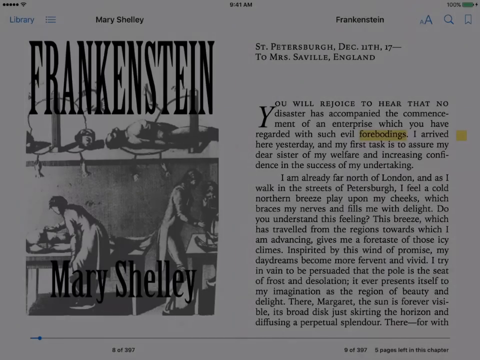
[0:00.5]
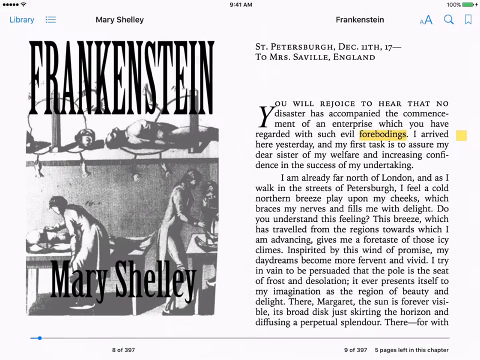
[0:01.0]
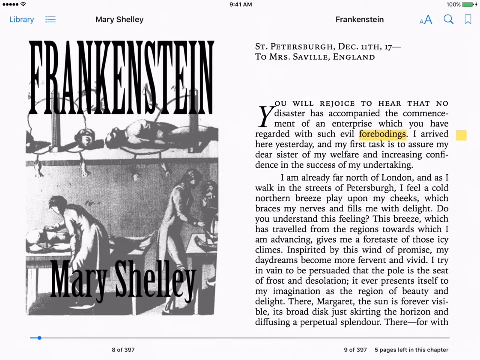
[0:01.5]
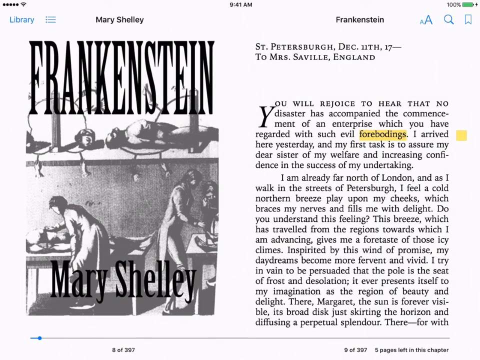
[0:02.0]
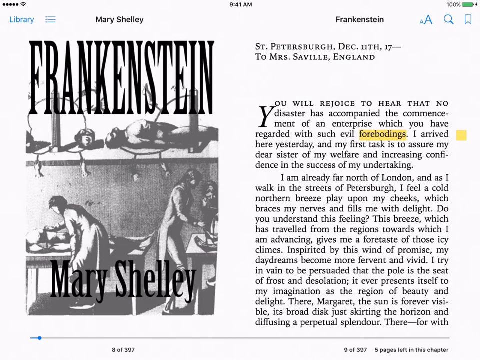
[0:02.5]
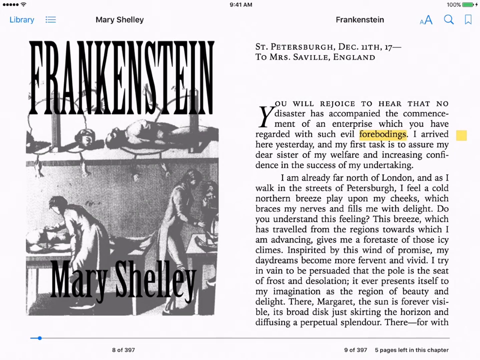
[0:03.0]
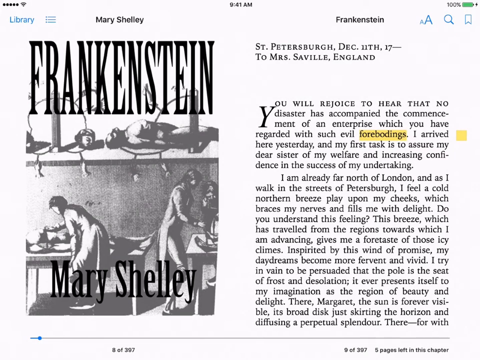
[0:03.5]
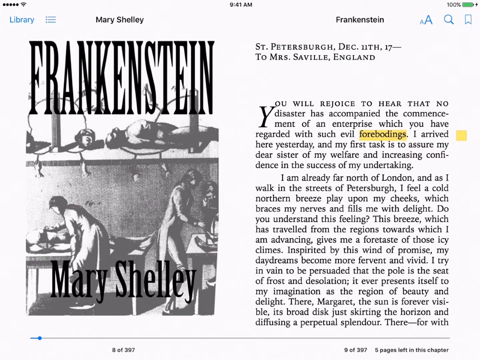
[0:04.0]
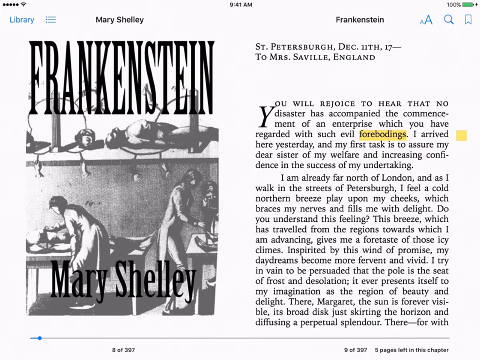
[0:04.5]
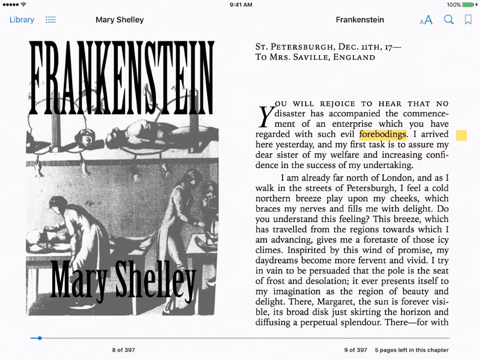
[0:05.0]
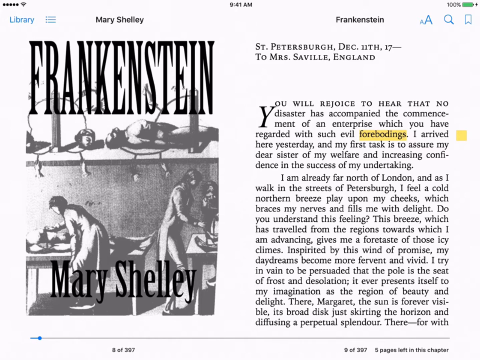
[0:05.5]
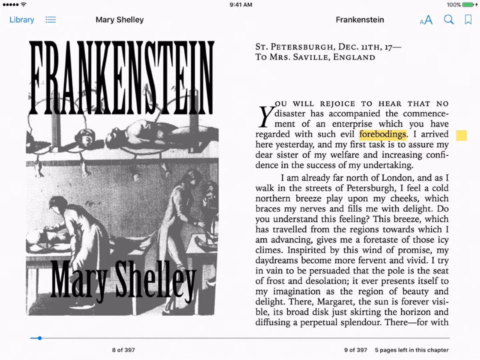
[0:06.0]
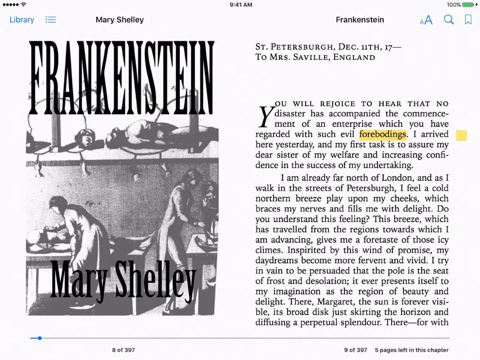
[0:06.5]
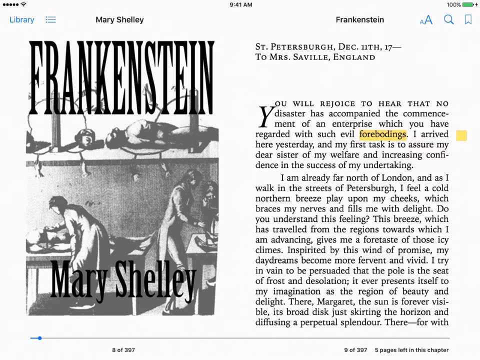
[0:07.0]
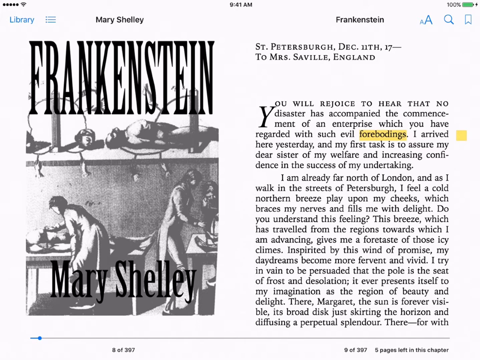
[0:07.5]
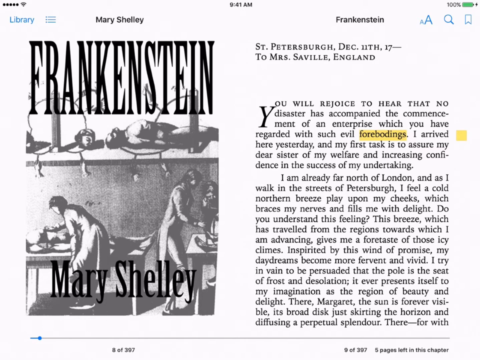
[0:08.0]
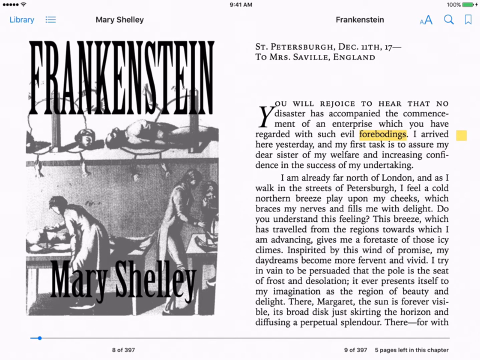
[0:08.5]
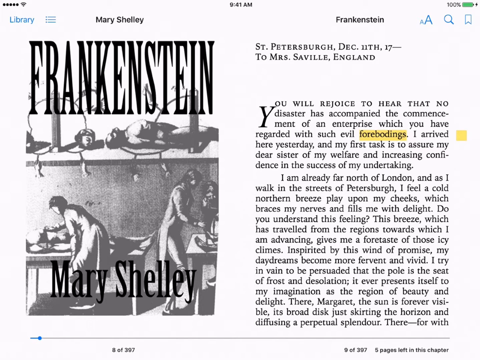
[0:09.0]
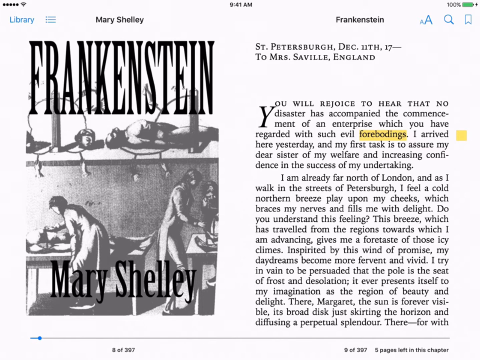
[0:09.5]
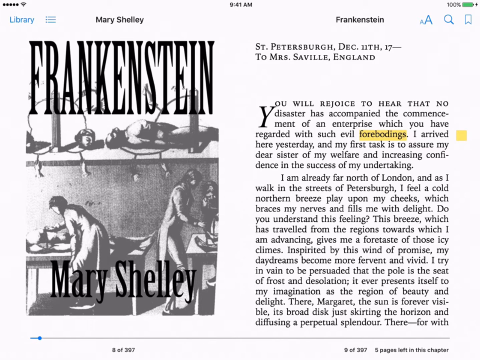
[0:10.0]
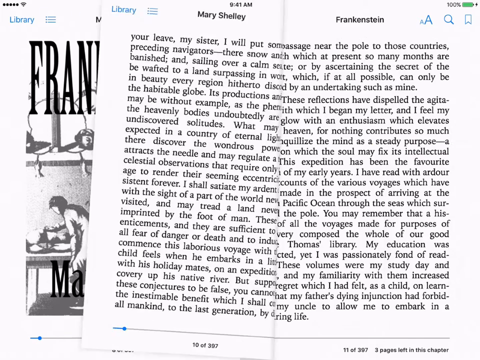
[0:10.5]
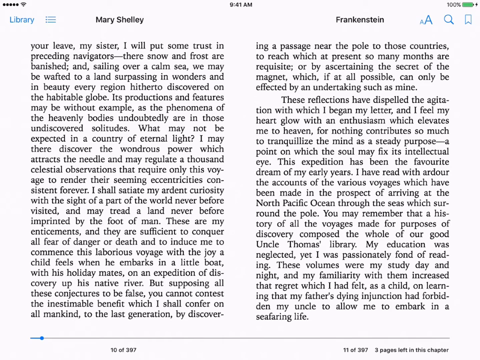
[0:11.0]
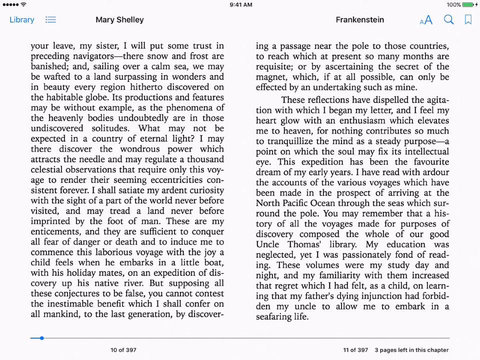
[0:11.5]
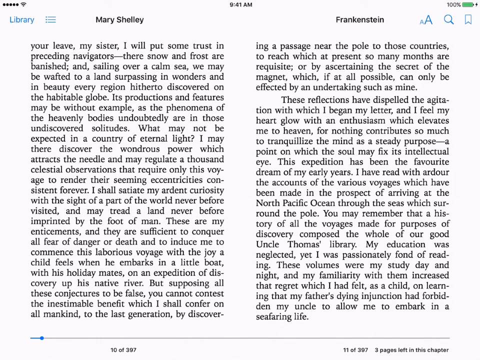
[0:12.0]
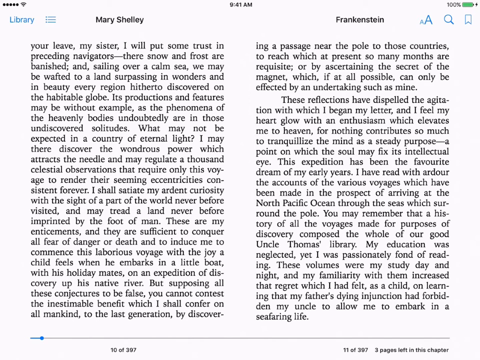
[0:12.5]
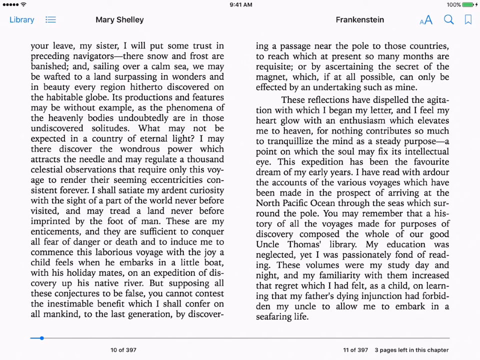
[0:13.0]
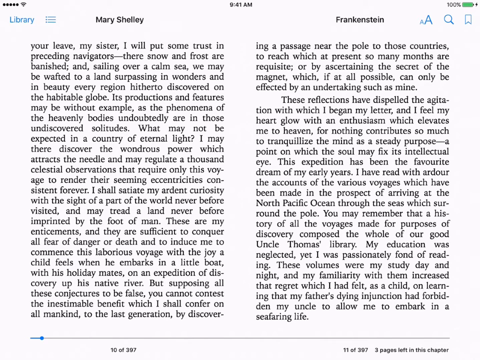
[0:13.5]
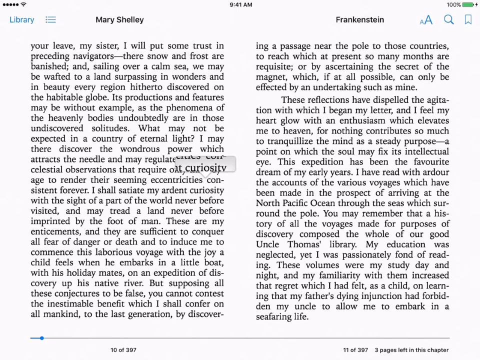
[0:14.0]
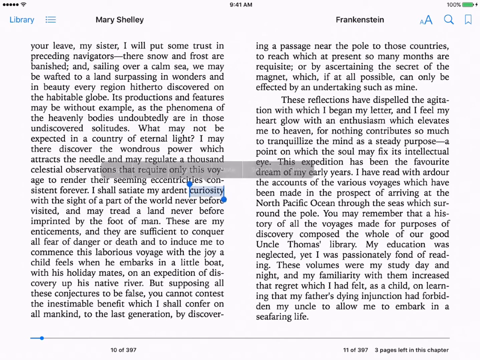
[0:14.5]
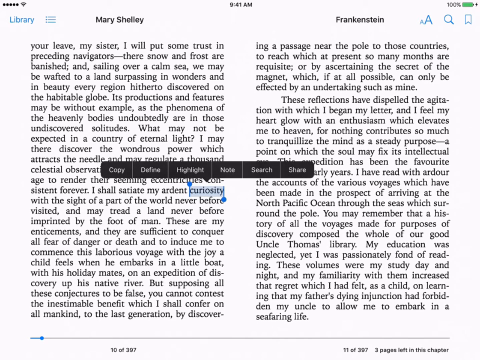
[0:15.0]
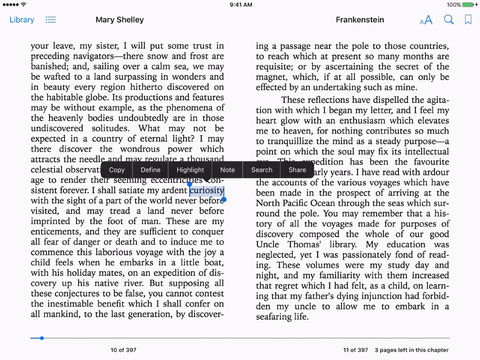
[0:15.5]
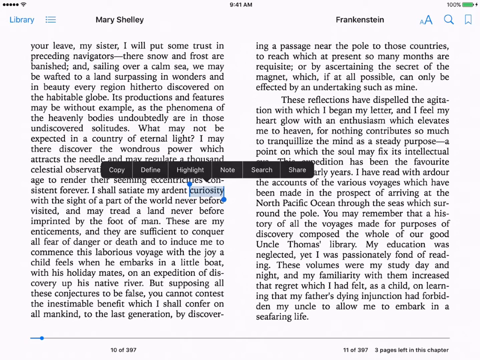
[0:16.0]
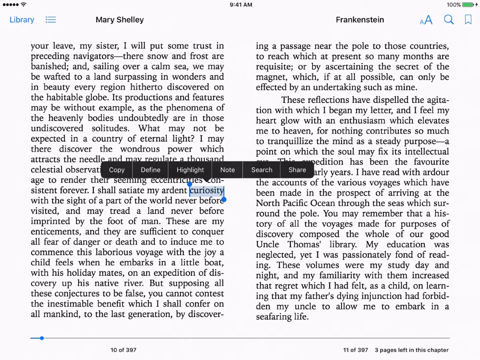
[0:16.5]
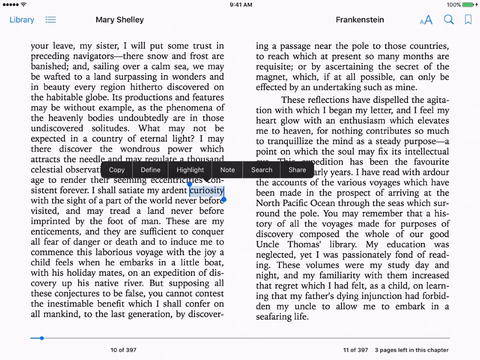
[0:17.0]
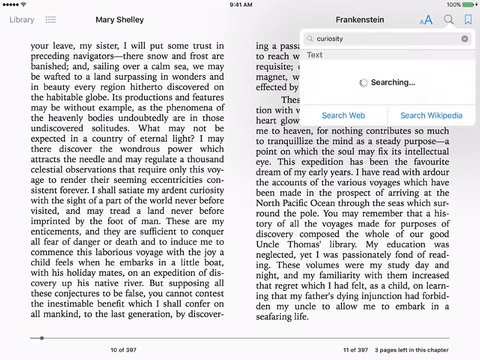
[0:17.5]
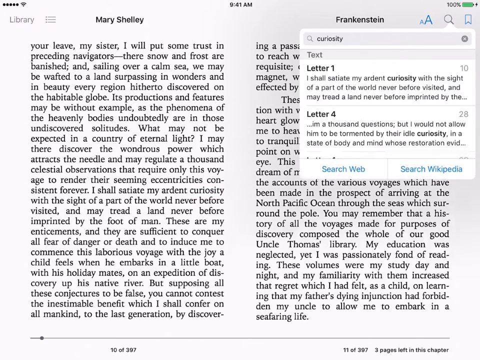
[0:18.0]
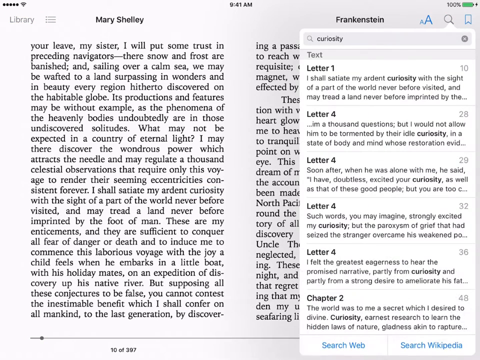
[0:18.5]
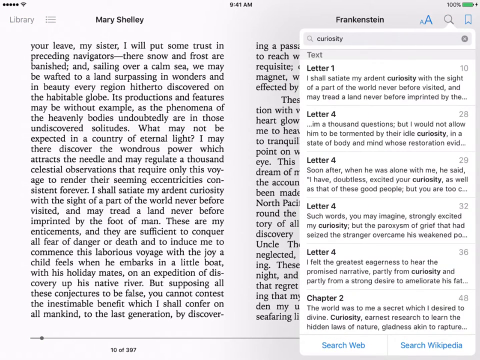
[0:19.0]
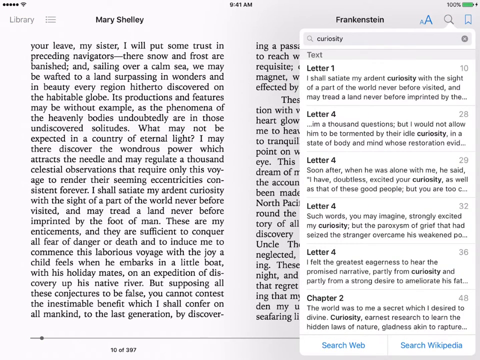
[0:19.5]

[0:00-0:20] A book by Mary Shelley titled Frankenstein is displayed on what looks like a phone or tablet. The first page is shown, with the title "Saint Petersburg, December 11th, 17, to Miss Saville, England." Only the first paragraph is readable: "You will rejoice to hear that no disaster has accompanied the commencement of the enterprise which we have regarded with such evil forebodings. I arrived here yesterday and my first task is to assure my dear sister of my welfare and increasing confidence in the success of my undertaking." The screen also shows "library," the time, 9:41 a.m., an editing section with a capital letter A, a search icon, and the battery. The view then moves on to the next page, continuing through the pages and paragraphs of the book.